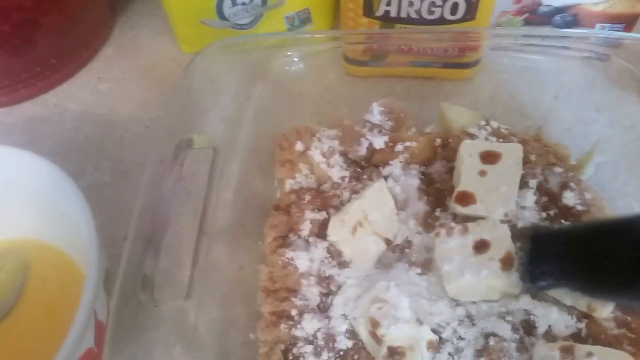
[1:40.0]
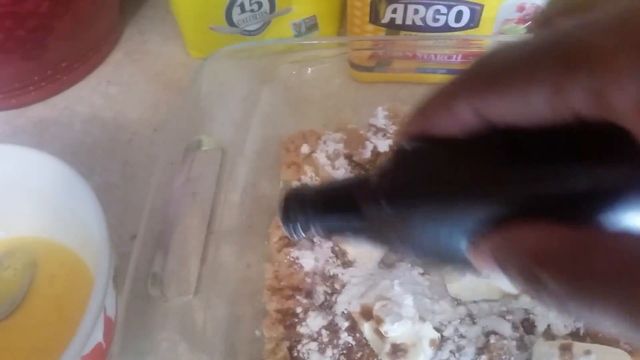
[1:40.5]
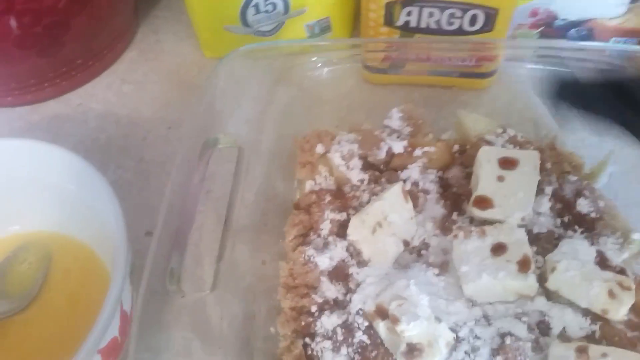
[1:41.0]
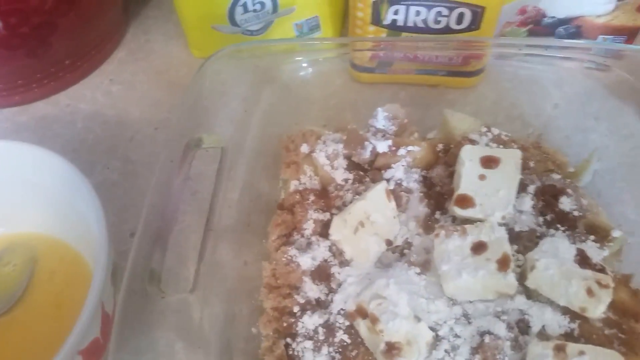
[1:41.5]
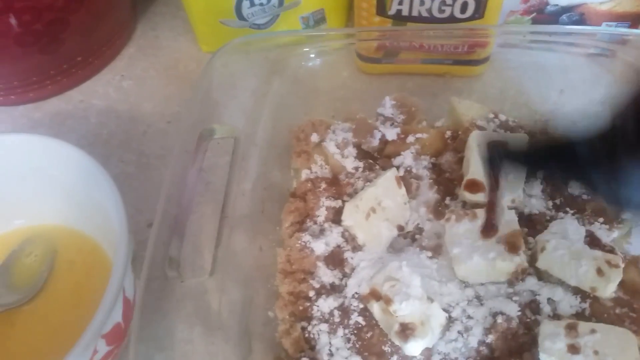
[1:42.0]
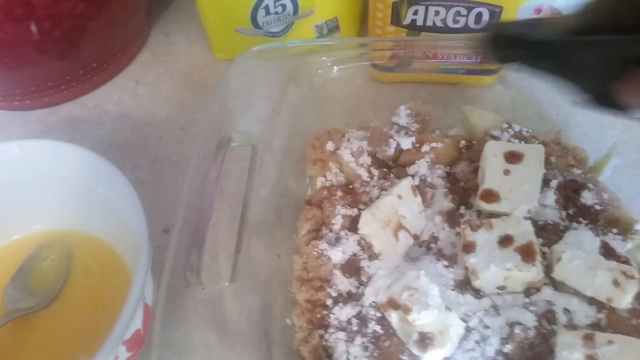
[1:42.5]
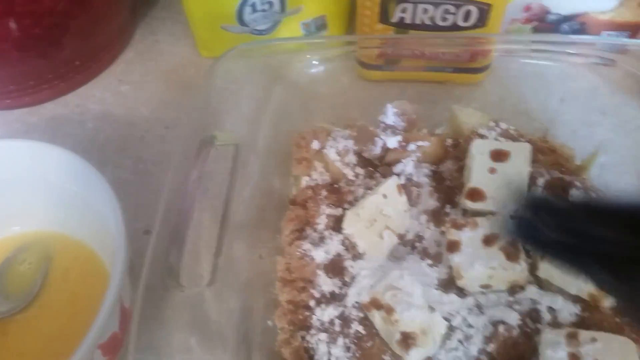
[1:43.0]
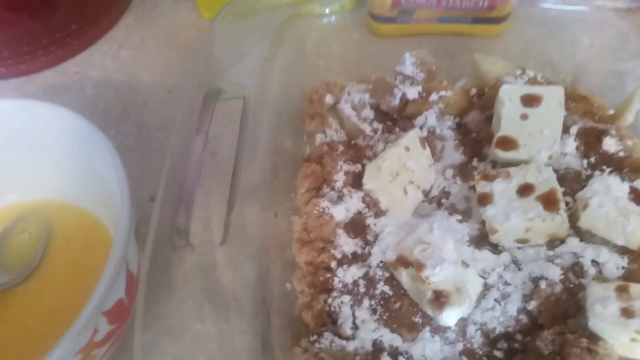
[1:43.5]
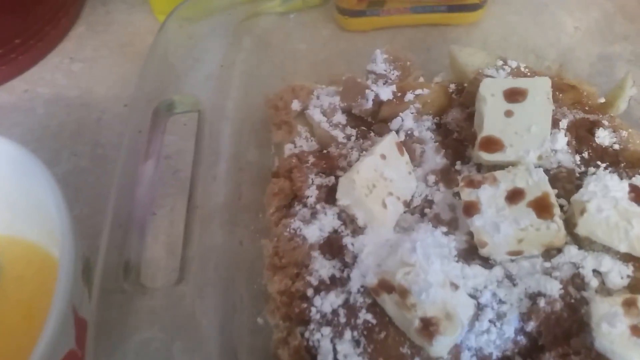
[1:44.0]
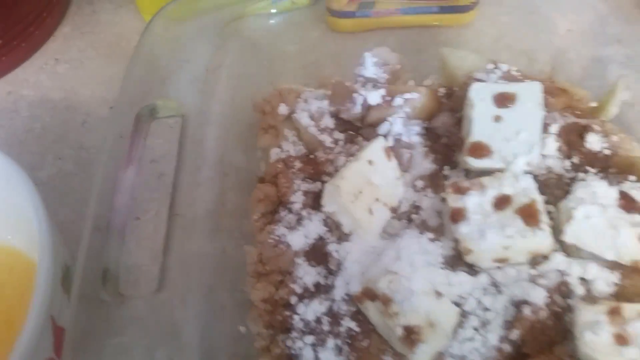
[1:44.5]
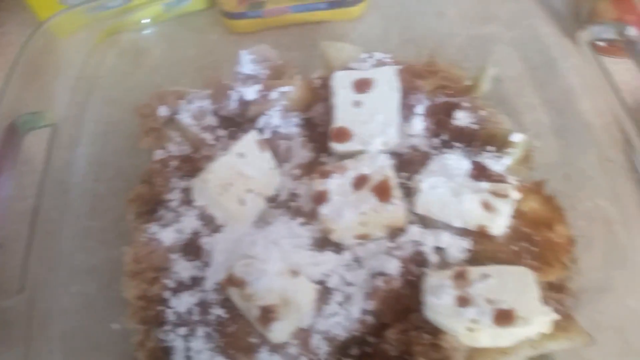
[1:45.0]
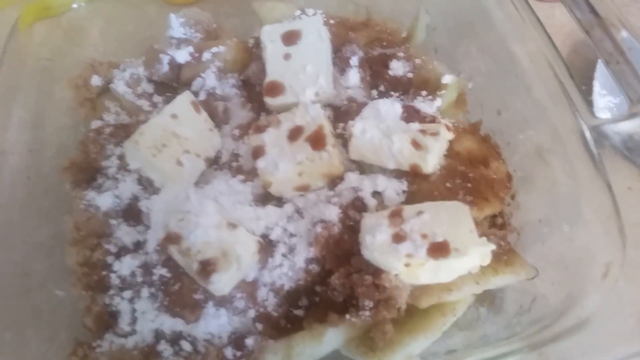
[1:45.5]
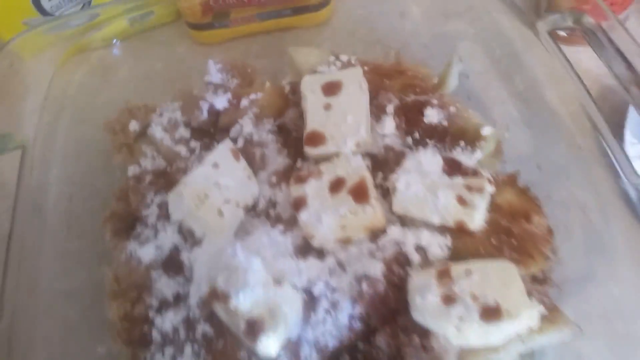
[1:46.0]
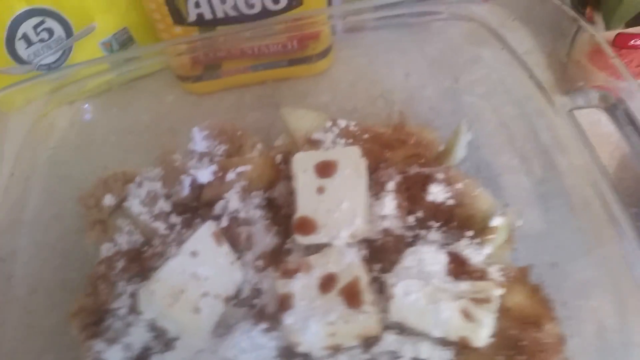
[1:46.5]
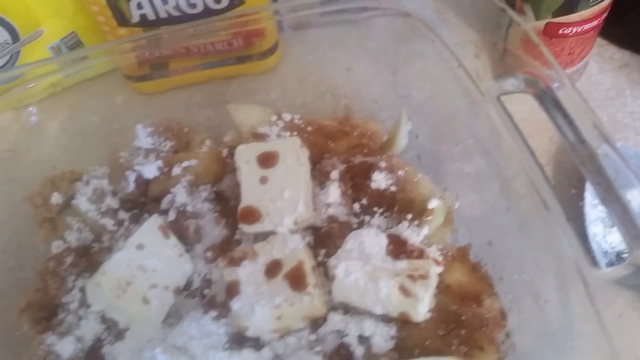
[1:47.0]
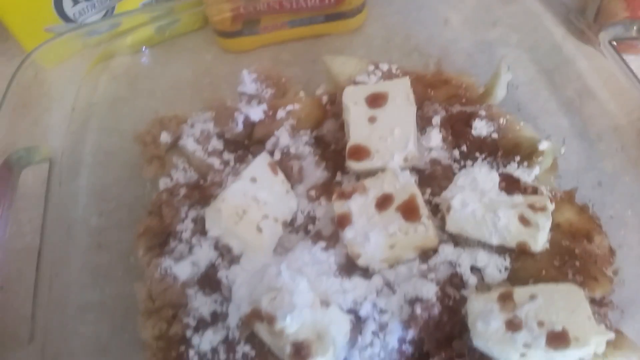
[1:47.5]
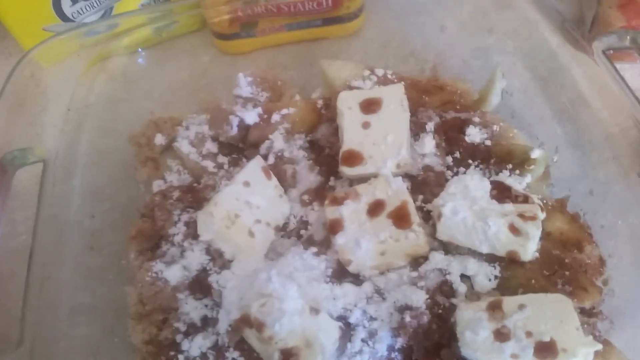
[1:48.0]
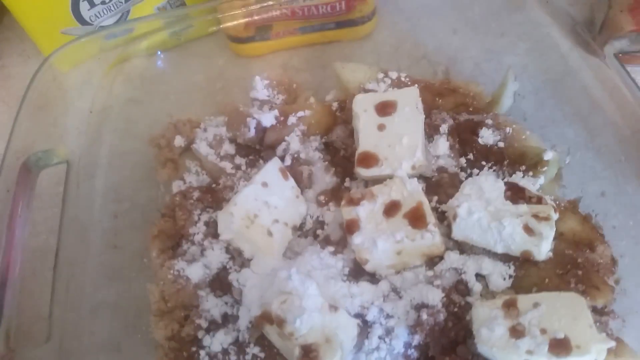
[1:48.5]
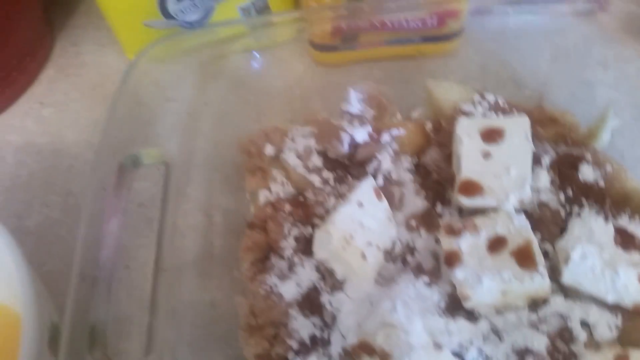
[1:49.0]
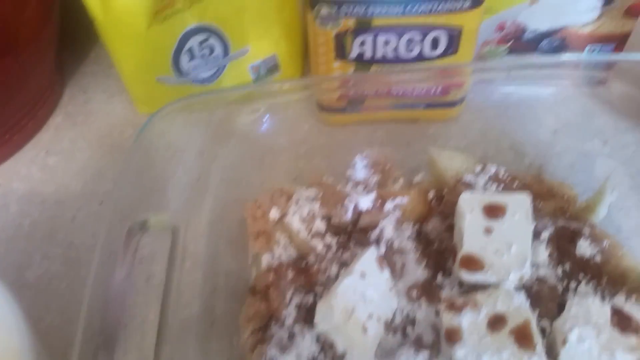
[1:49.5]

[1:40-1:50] Vanilla, butter, sugar, brown sugar, apples, and eggs in a bowl are shown against a kind of wooden background. The brown-skinned individual adds vanilla drips to the bowl. No other people or animals appear, and the setting does not change.